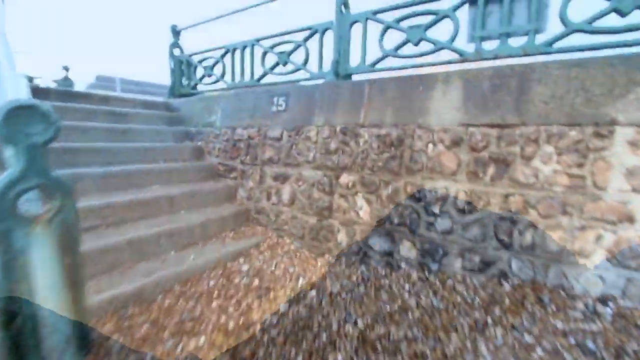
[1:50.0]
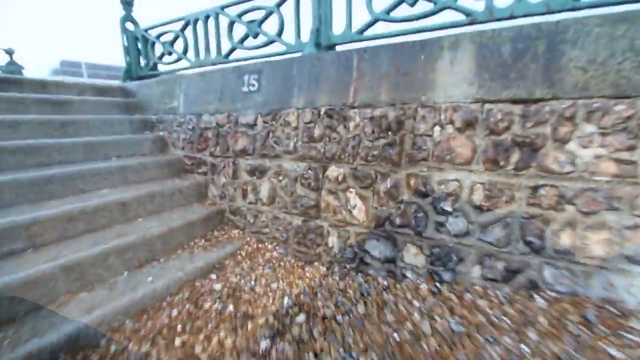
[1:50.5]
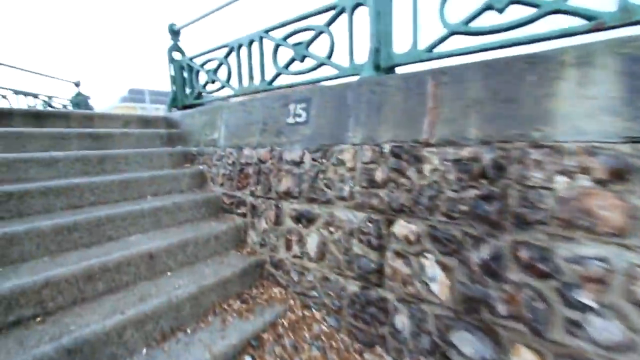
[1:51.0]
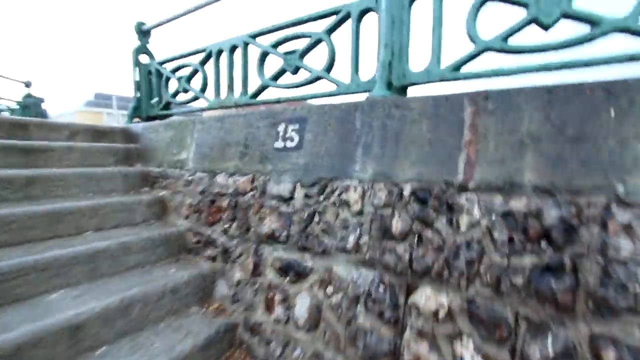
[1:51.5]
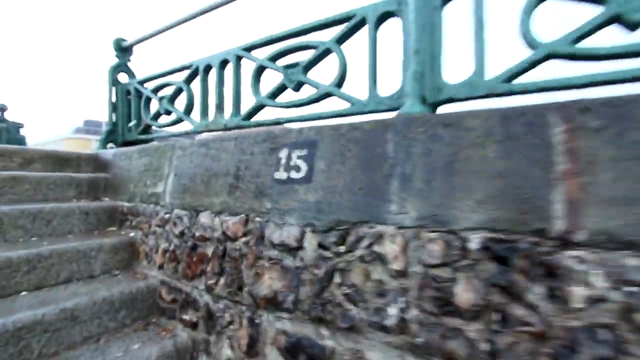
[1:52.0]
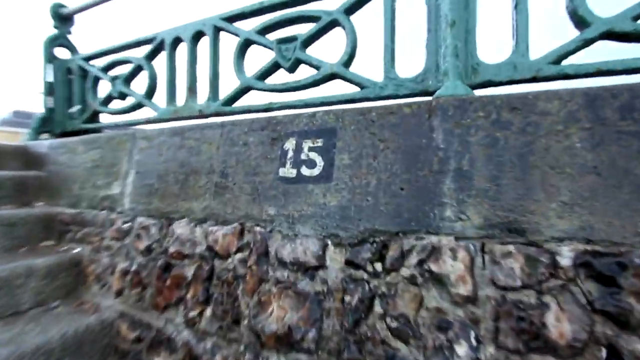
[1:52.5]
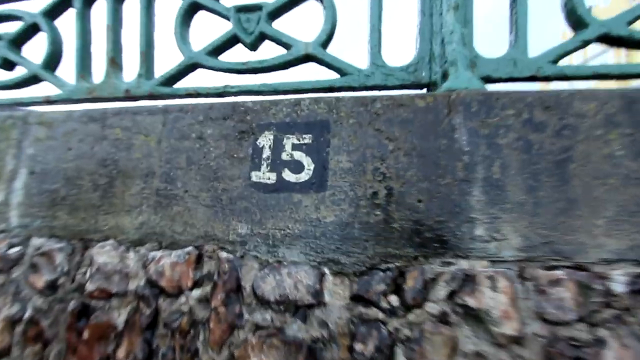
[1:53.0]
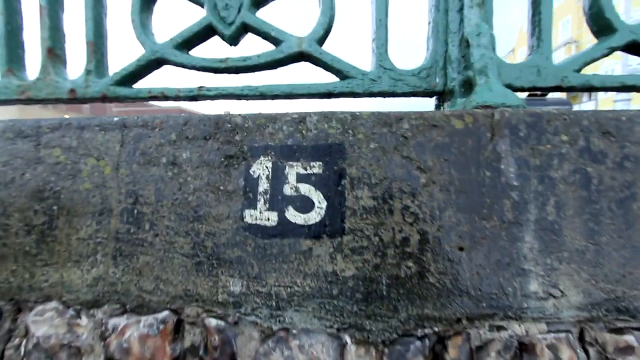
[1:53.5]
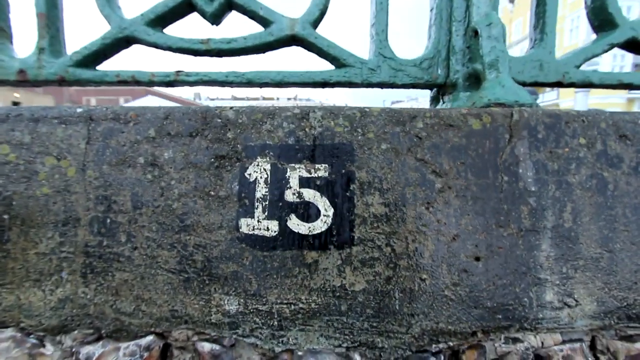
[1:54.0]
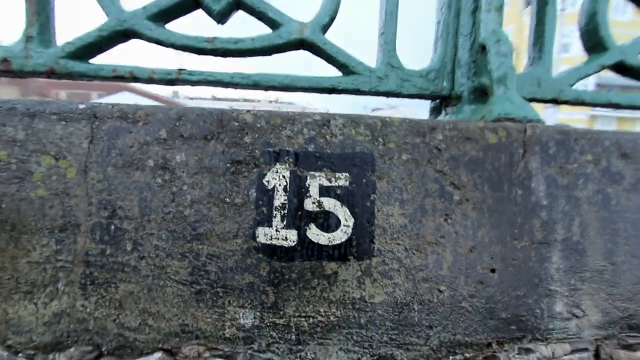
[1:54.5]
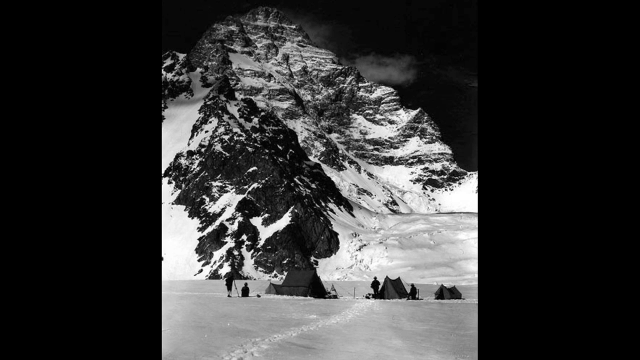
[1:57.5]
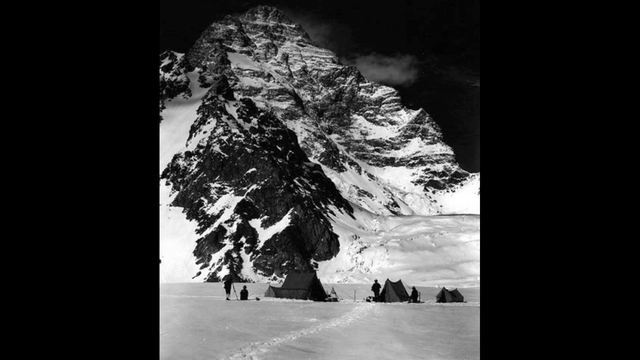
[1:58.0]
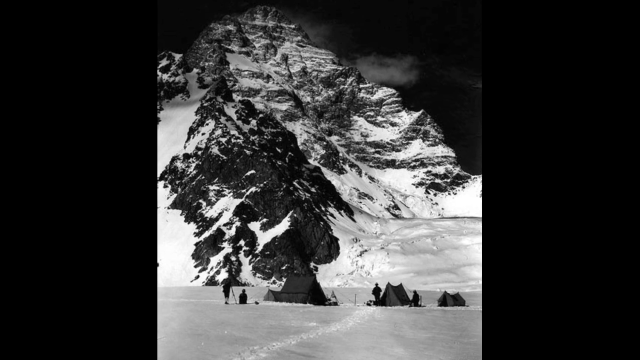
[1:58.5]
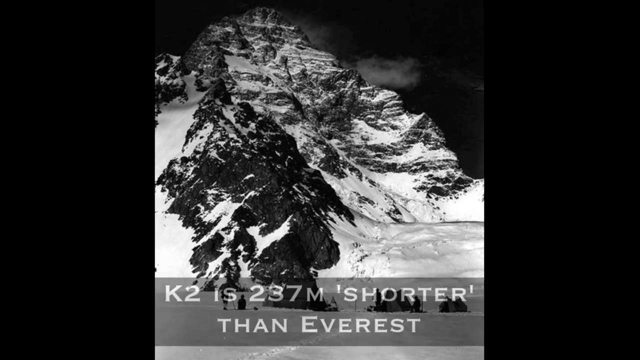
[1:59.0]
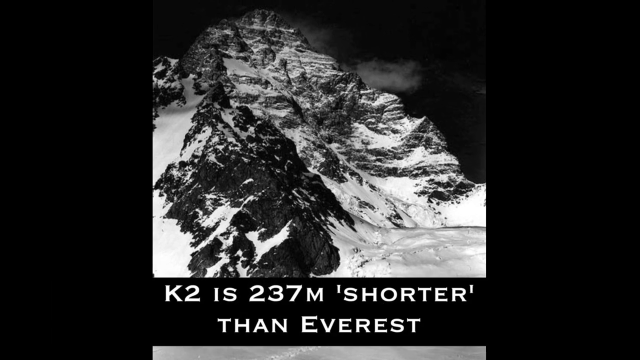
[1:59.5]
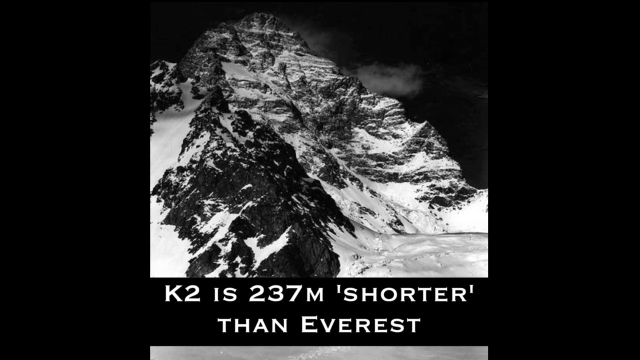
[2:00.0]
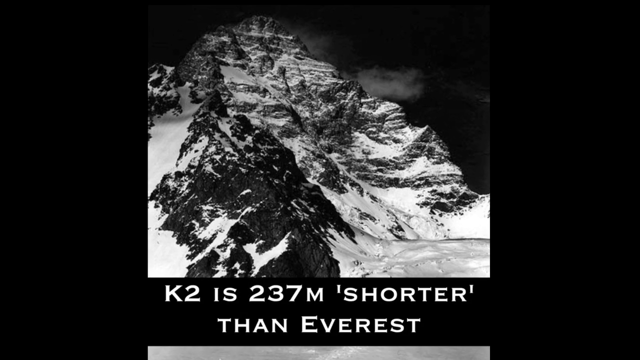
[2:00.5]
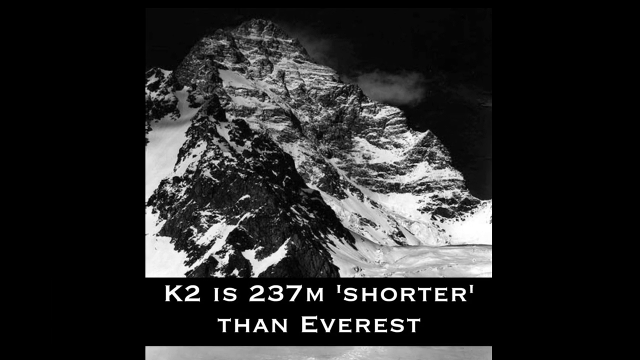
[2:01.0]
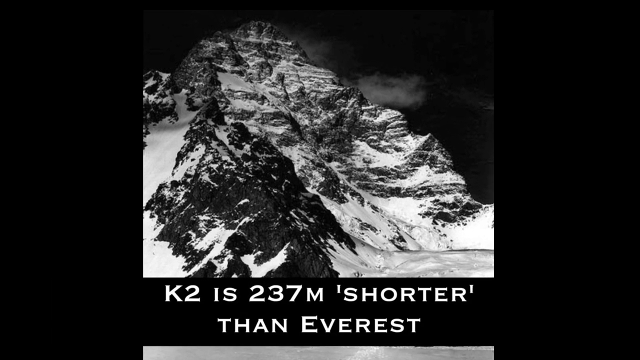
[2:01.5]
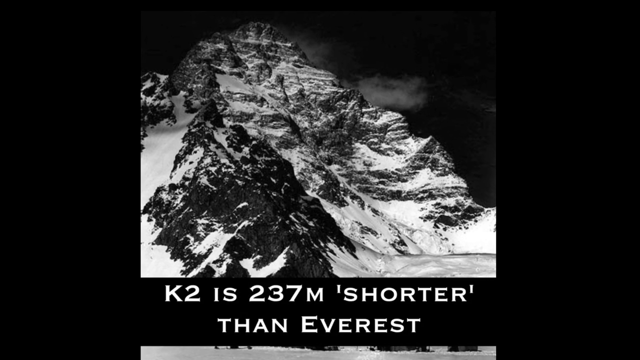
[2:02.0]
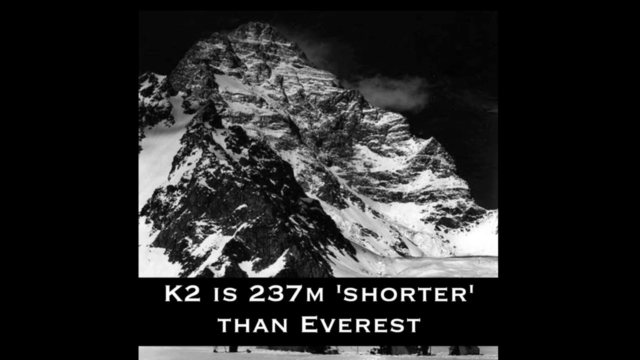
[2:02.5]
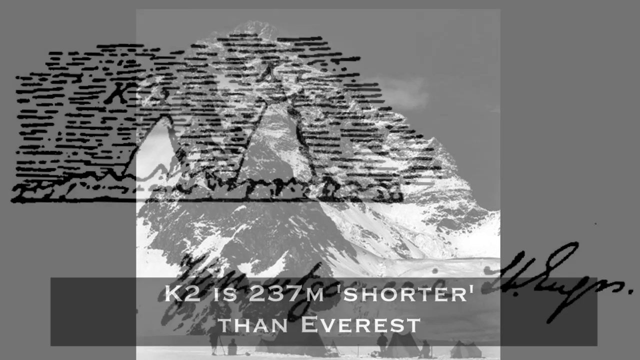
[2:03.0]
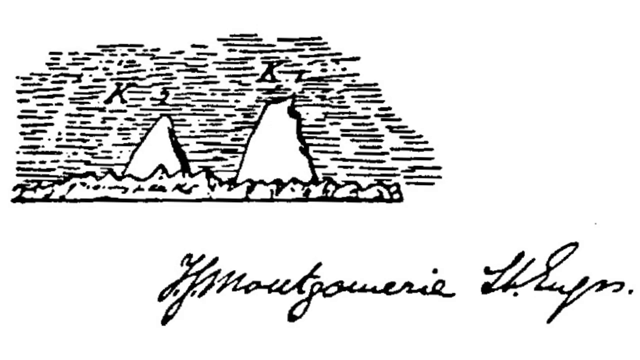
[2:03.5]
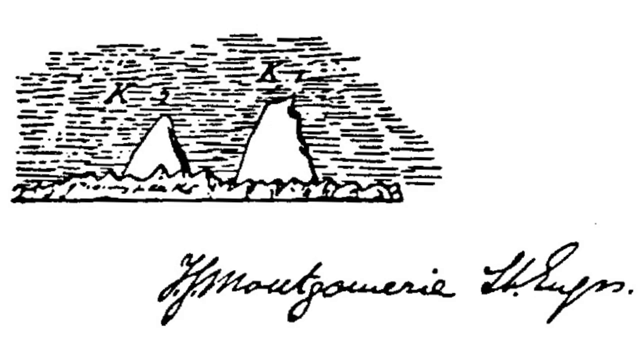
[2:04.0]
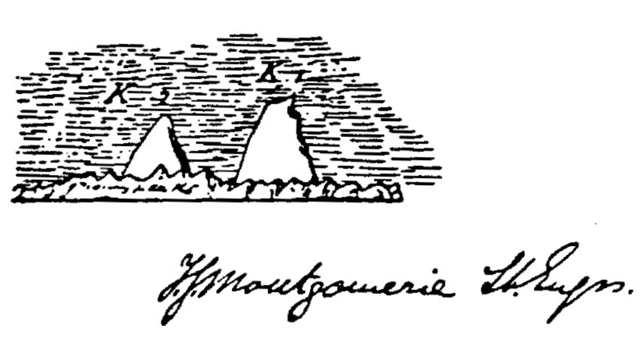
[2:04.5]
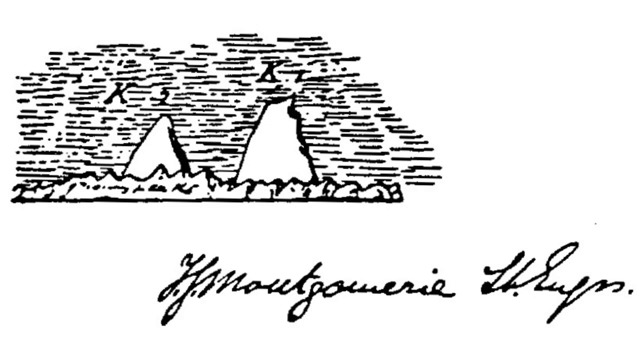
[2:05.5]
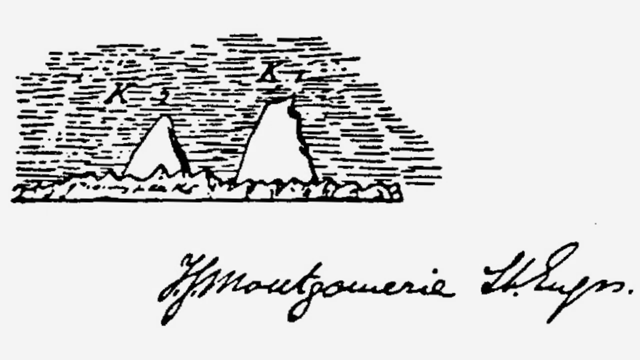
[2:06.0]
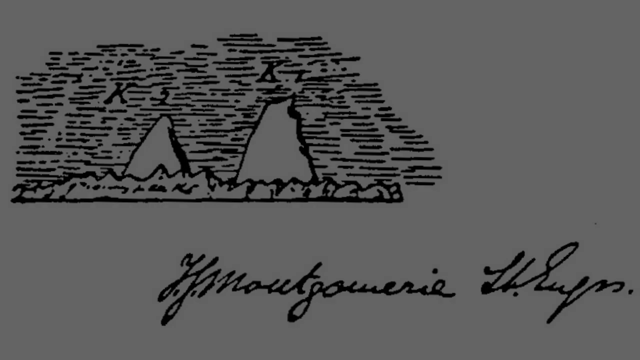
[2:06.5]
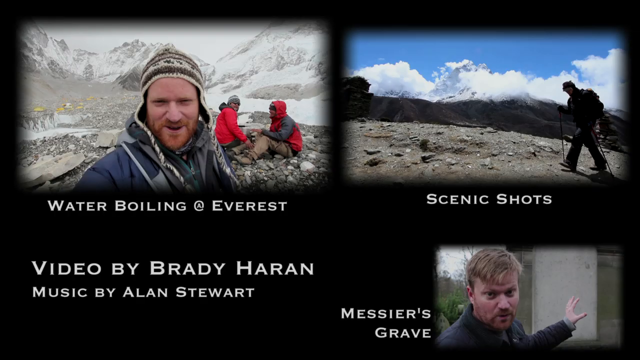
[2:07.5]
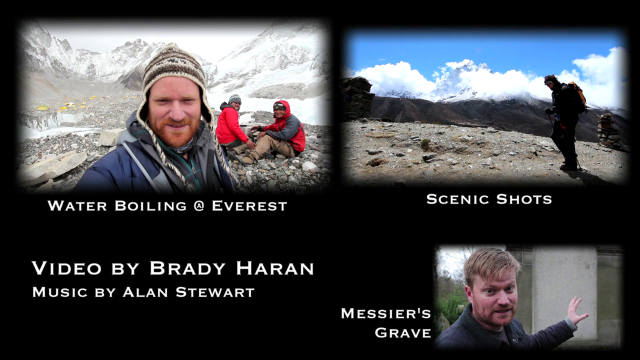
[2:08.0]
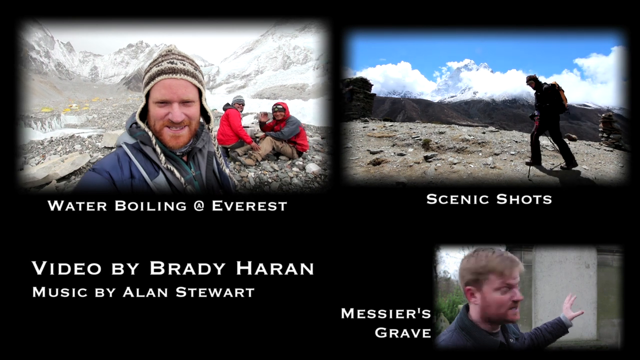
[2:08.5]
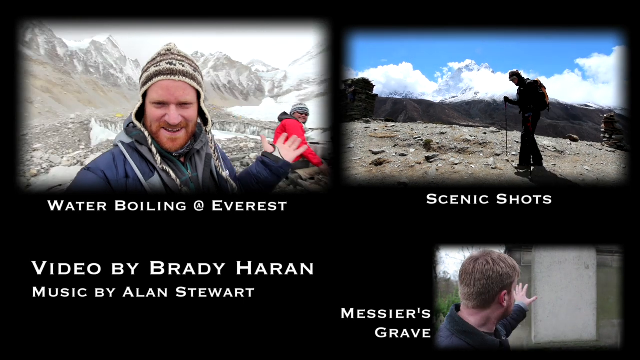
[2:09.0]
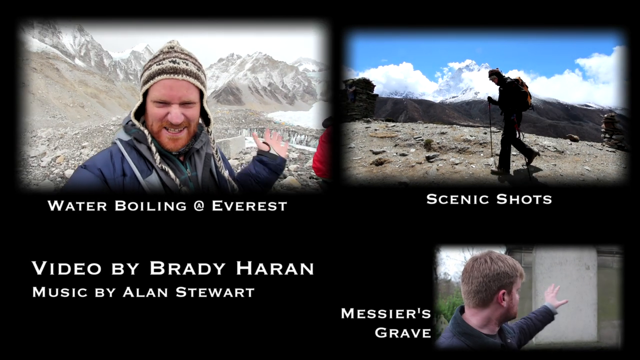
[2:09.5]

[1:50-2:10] The camera moves in on a white number 15 painted on a black box on the lower part of a cement wall, beside a small flight of stone stairs about six steps high, and zooms in on the wall next to it. Above the number is a kind of greenish iron fence. A black and white outdoor image of a mountain carries the text "K2 is 237m shorter than Everest," followed by white paper with black and white sketches of mountains. Closing credits appear, with three videos in the upper left, upper right and bottom right showing people talking, and white text identifying the people.